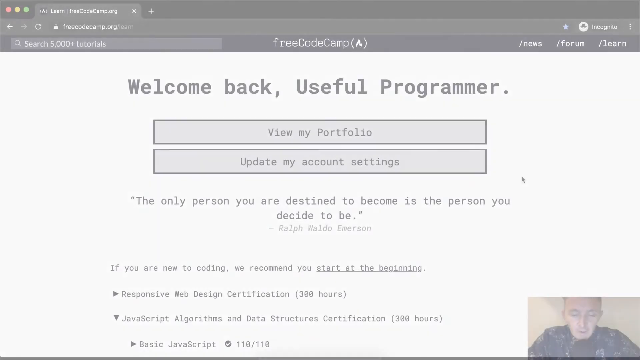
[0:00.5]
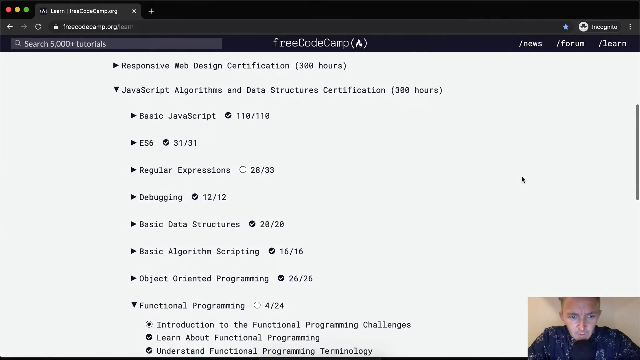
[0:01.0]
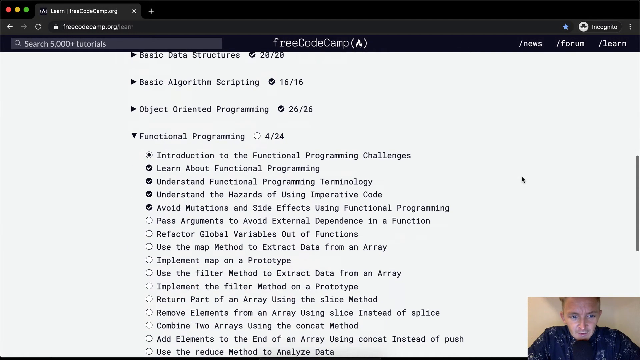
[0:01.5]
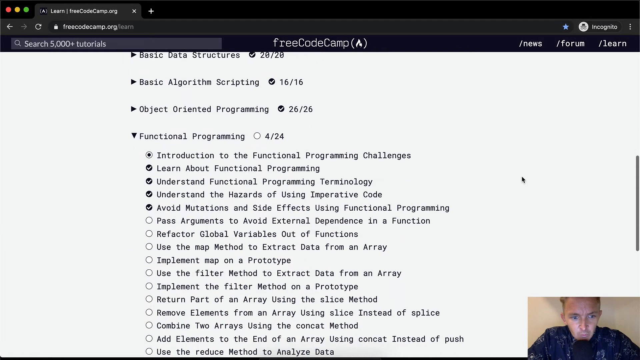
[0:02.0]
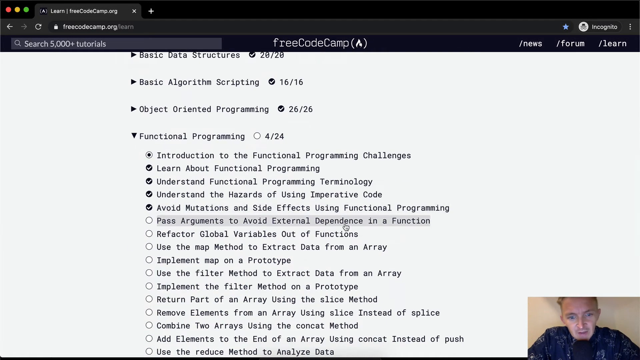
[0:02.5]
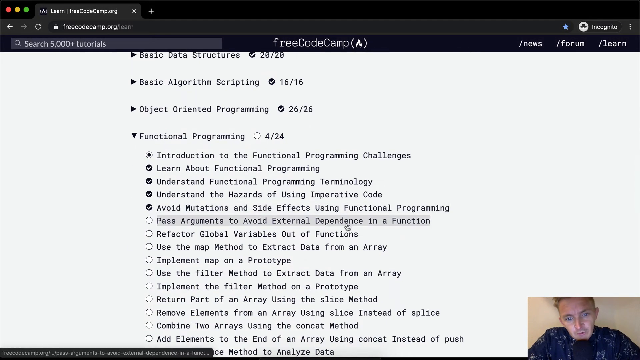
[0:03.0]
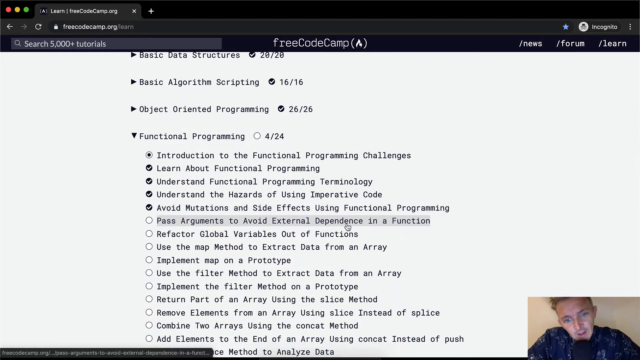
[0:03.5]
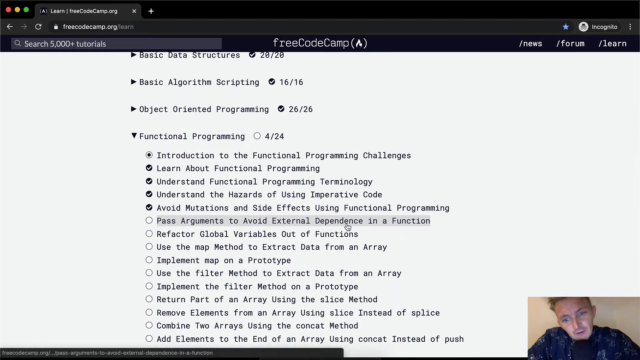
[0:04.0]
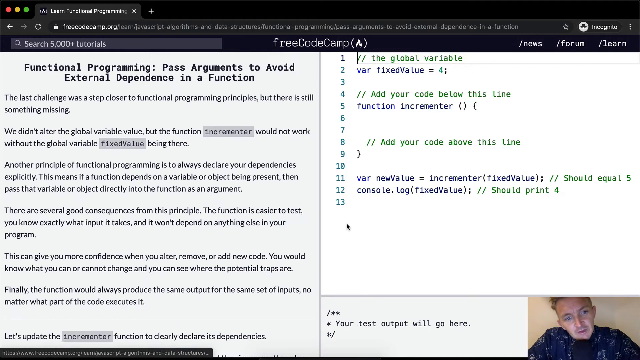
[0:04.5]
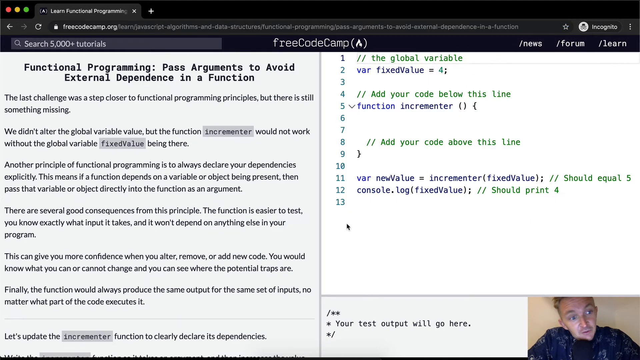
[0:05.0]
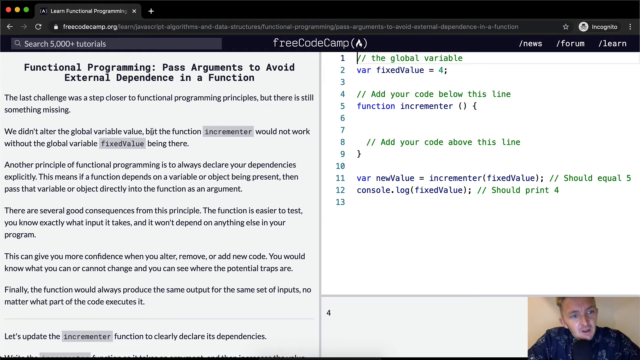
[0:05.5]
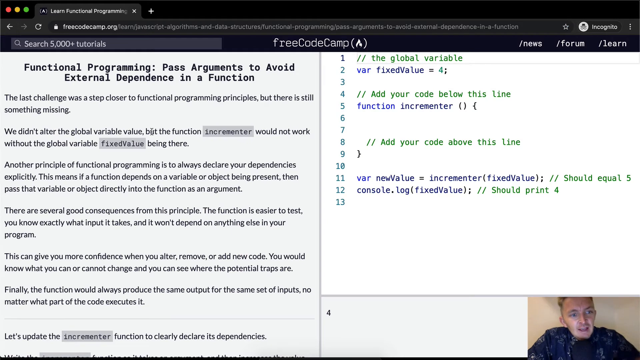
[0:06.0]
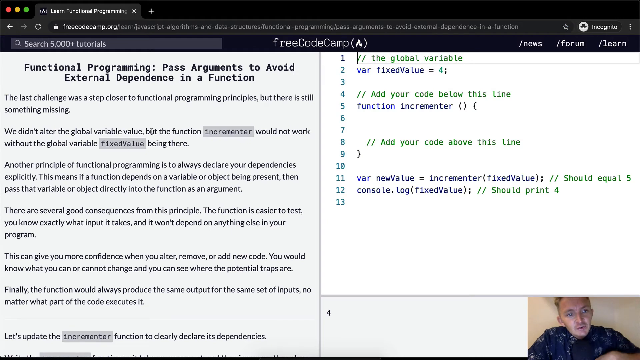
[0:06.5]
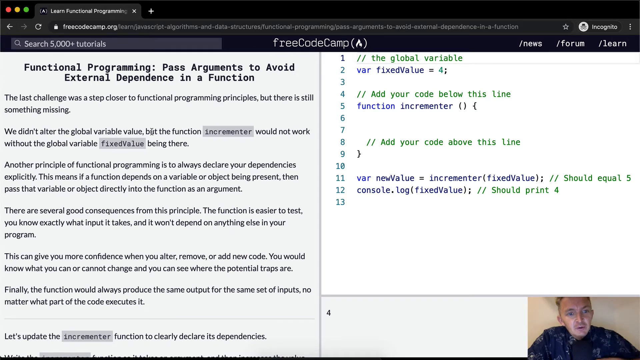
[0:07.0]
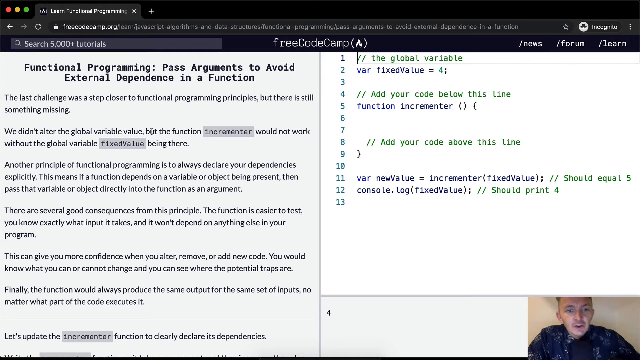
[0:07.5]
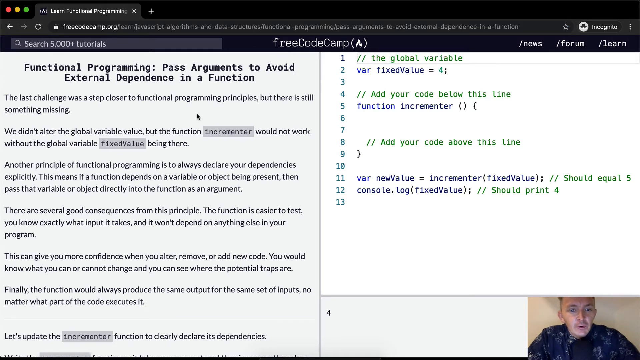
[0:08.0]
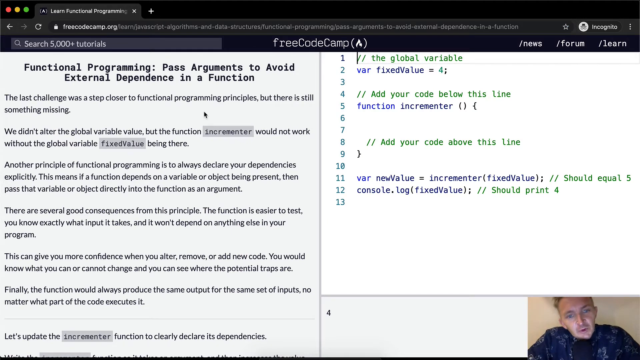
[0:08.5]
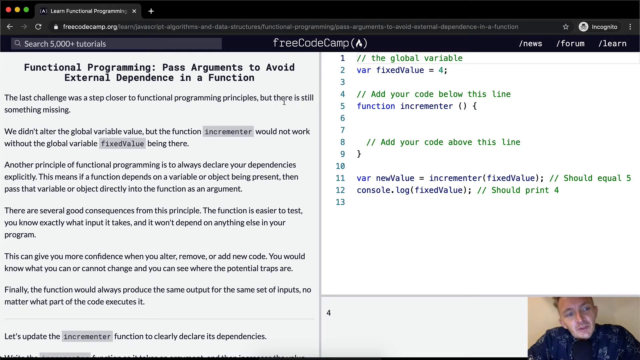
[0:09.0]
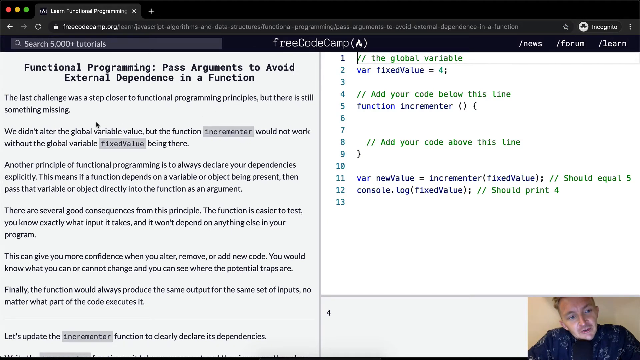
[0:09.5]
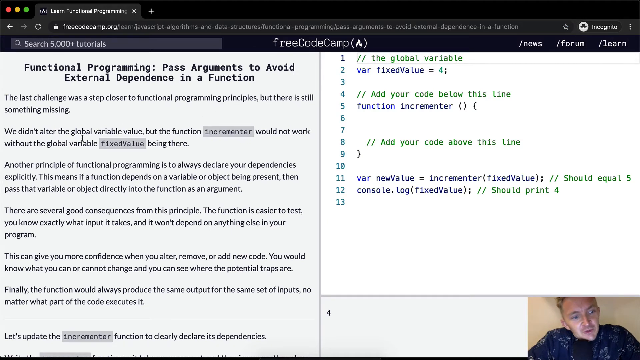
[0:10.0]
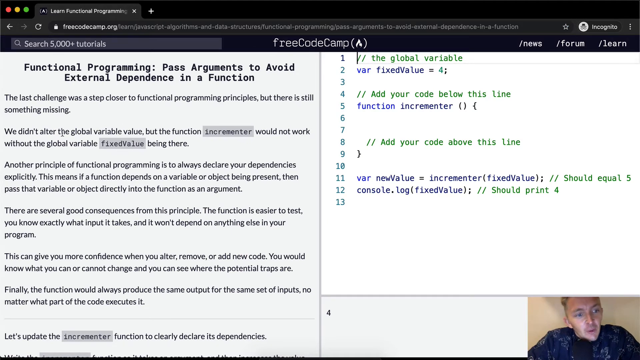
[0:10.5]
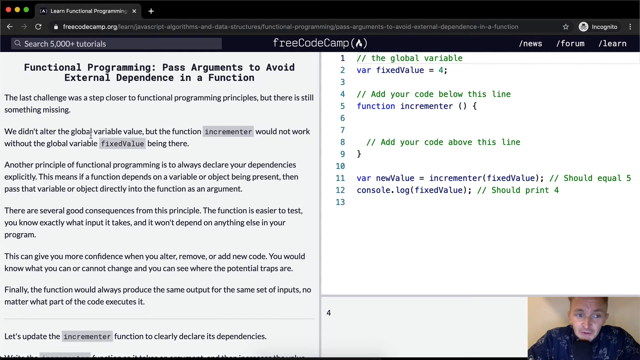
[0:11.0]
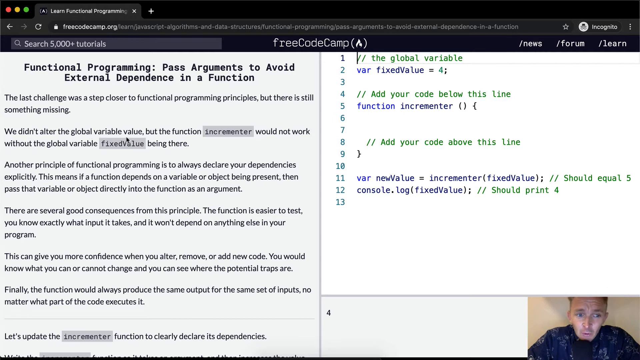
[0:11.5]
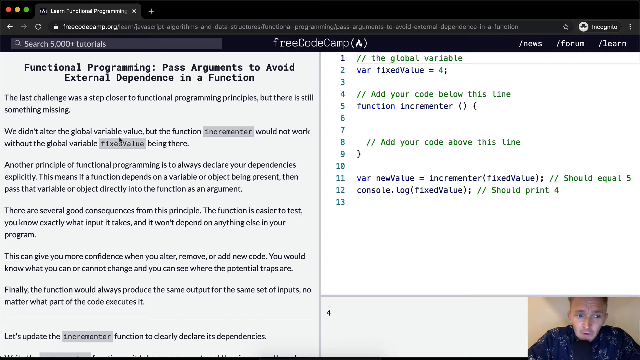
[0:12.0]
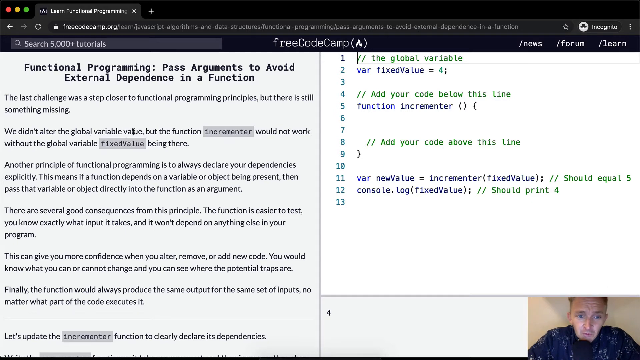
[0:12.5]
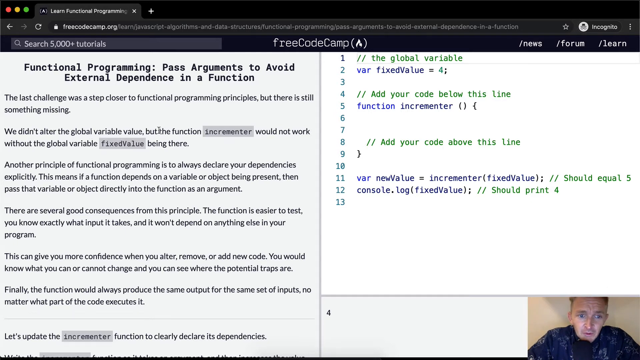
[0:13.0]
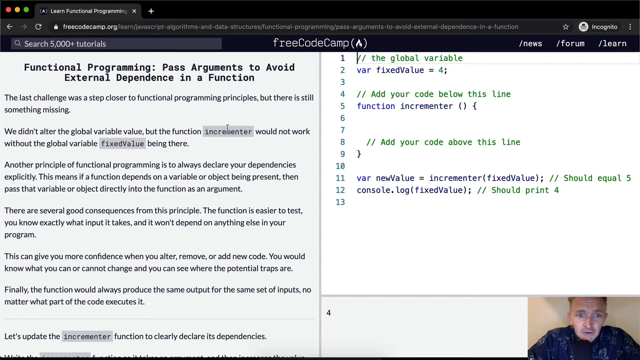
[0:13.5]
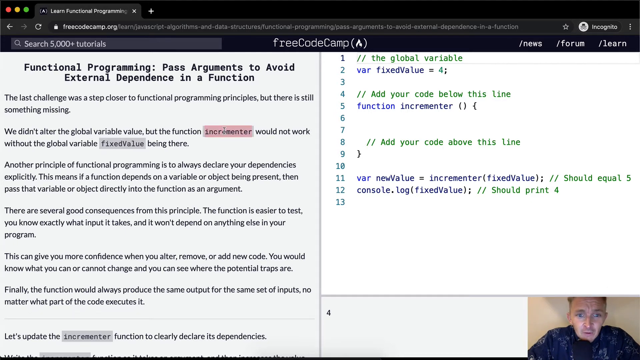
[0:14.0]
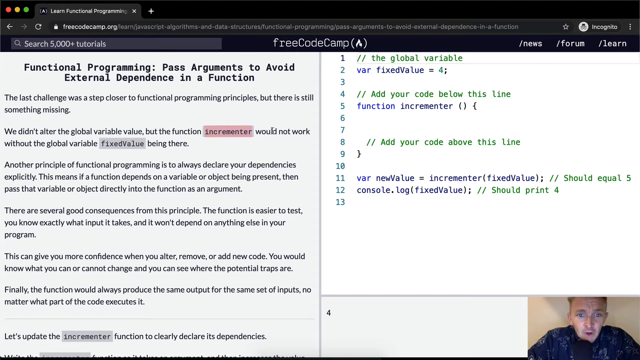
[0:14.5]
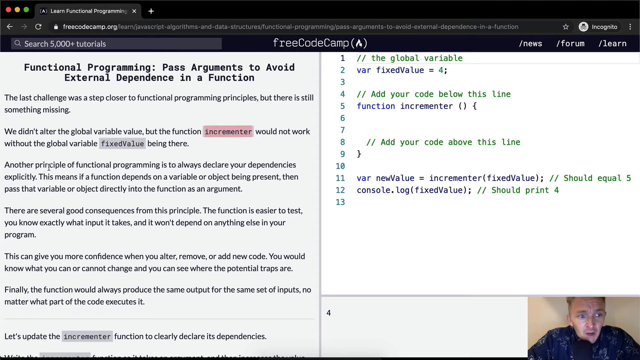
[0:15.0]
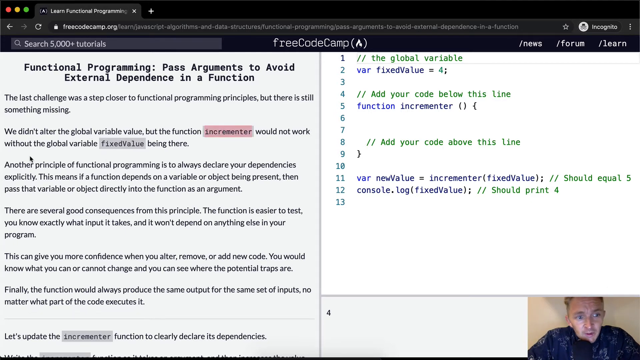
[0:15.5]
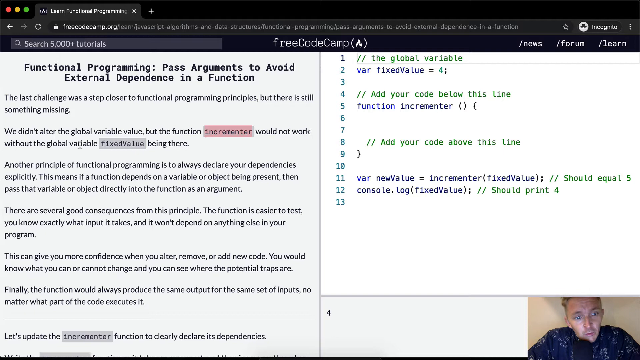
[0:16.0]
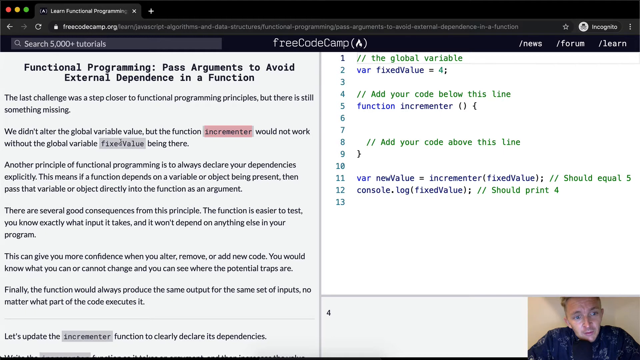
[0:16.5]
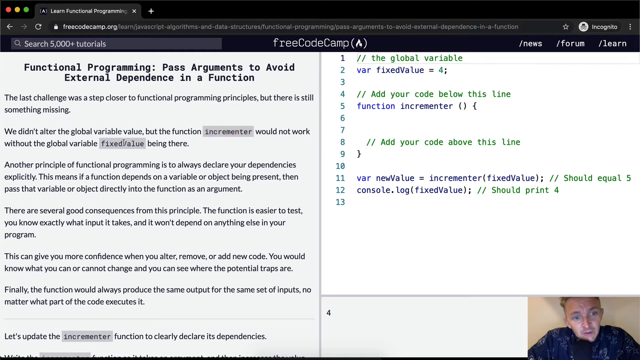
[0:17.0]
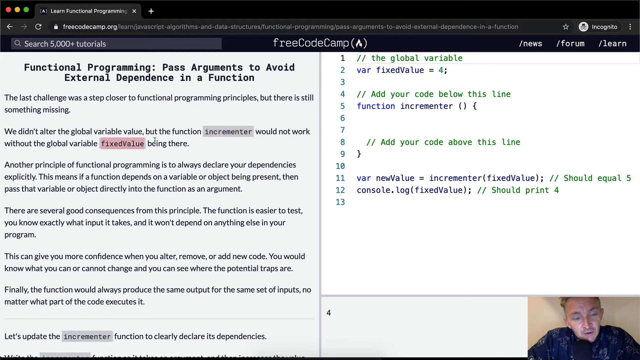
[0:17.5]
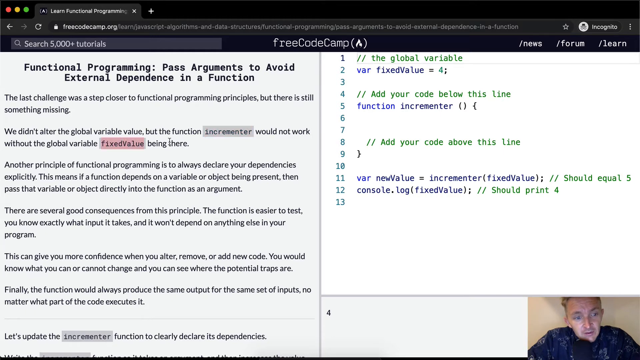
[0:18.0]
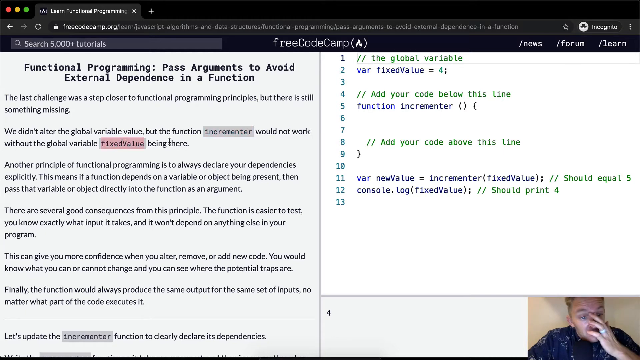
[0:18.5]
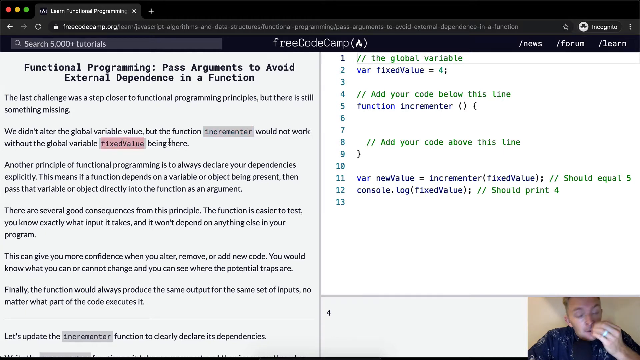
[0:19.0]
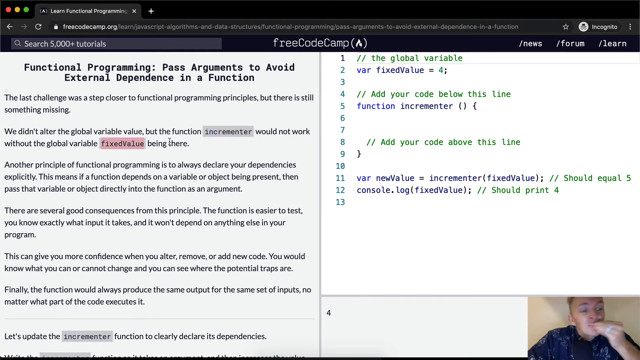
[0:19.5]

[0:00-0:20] A person shows a coding lesson from free code camp. A written passage is headed with functional programming and "how to pass arguments to avoid external dependence in a function." The passage includes "The last challenge was a step closer to functional programming principle" and "Another principle of functional programming is to always declare your dependencies," along with examples of the function. Coding is shown with the passage, and a man is busy talking. The important words in the passage are highlighted, and the program is shown bit by bit, with every step that has to be taken.